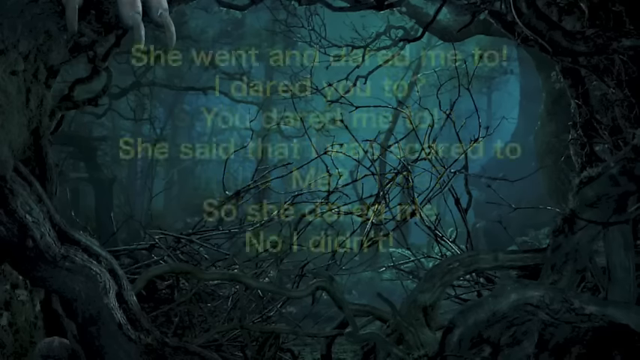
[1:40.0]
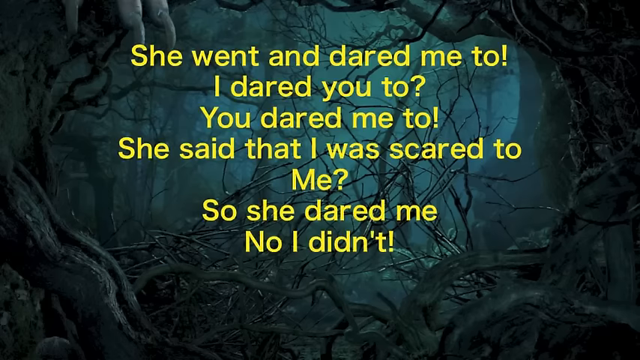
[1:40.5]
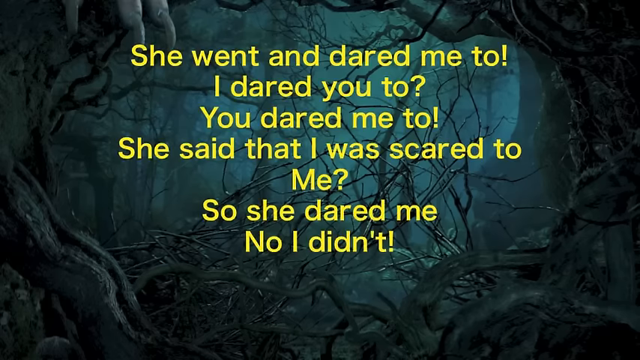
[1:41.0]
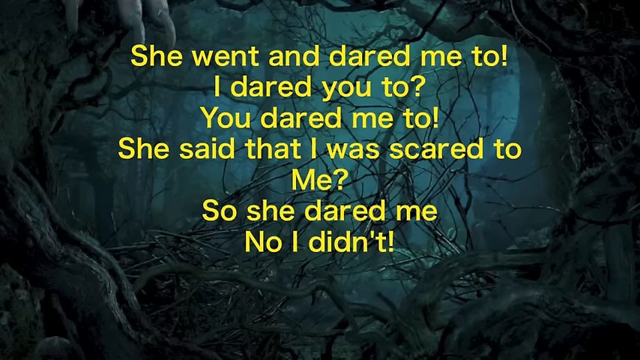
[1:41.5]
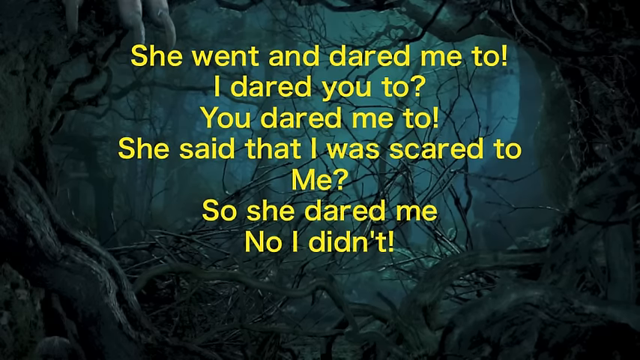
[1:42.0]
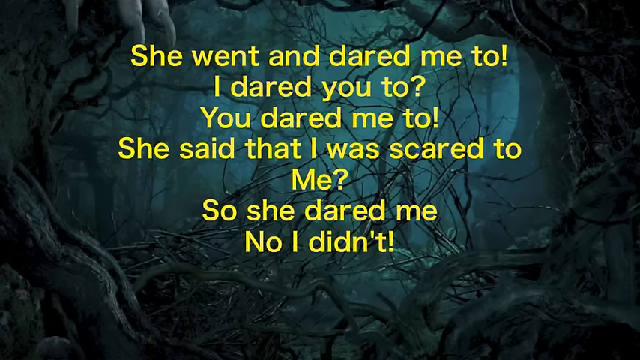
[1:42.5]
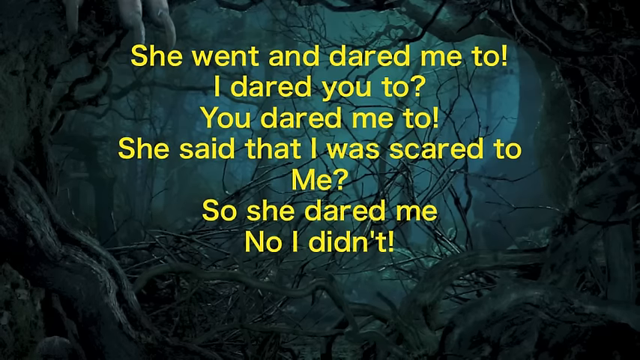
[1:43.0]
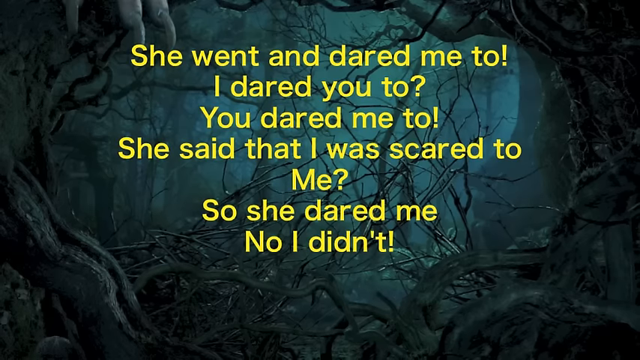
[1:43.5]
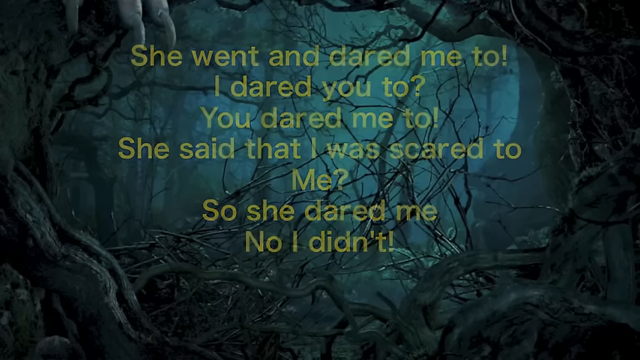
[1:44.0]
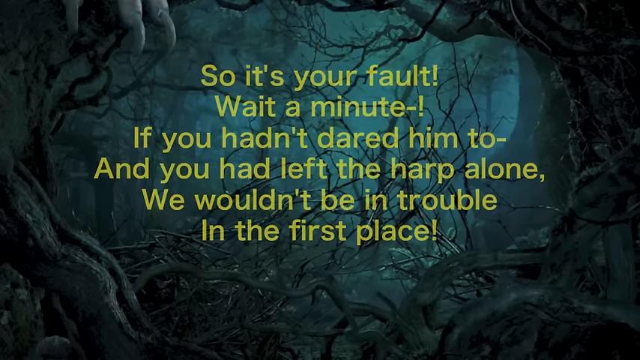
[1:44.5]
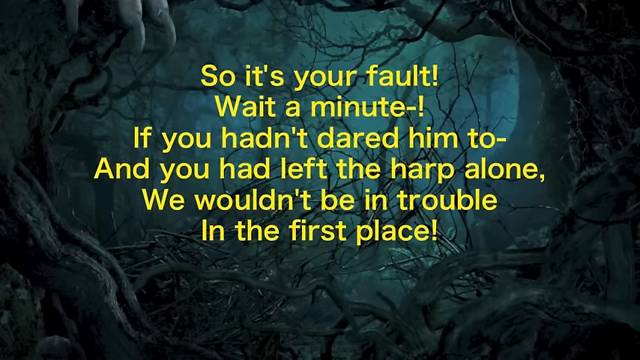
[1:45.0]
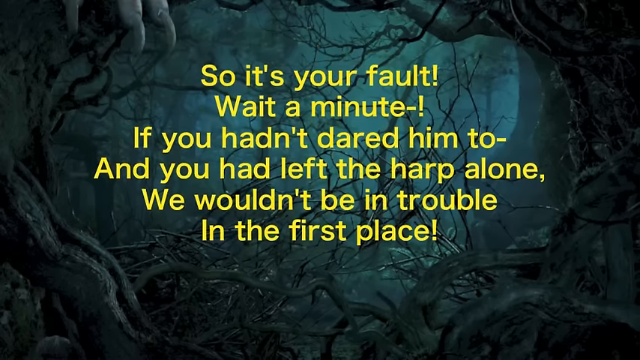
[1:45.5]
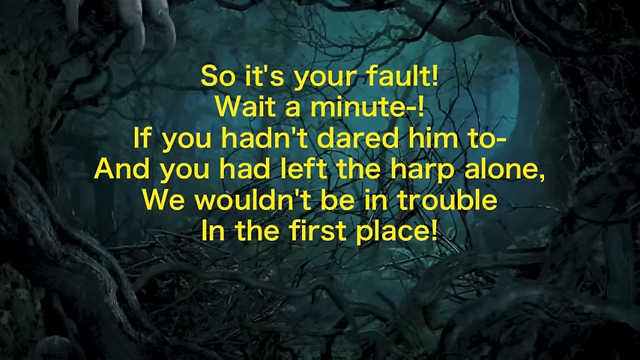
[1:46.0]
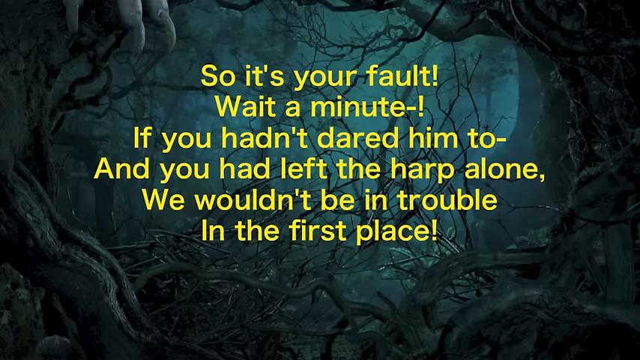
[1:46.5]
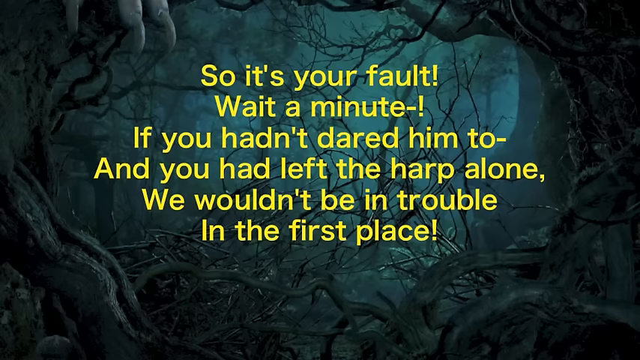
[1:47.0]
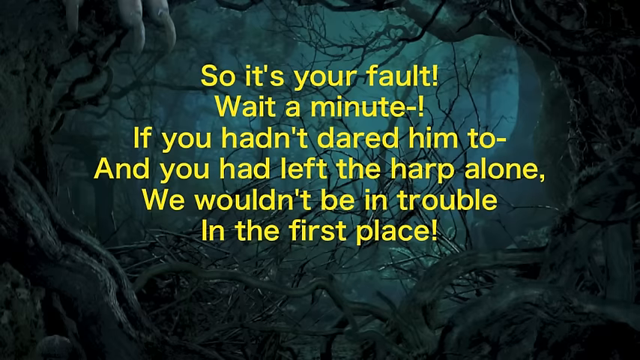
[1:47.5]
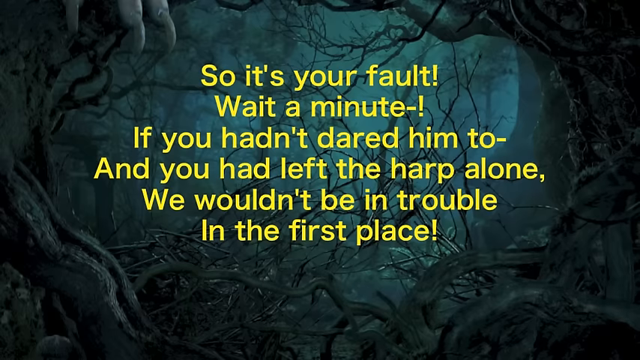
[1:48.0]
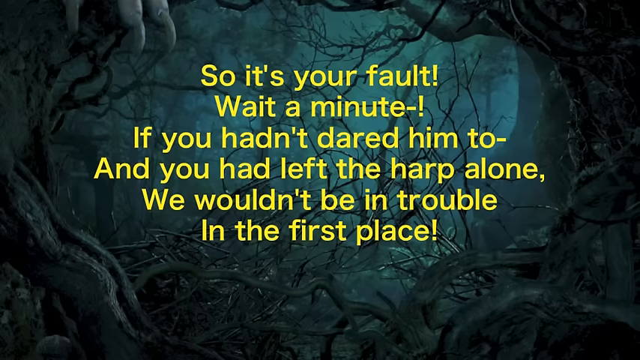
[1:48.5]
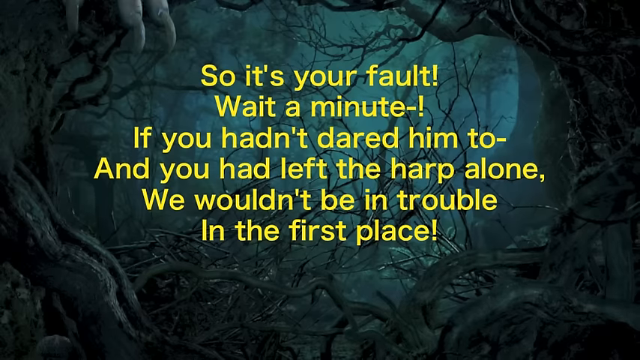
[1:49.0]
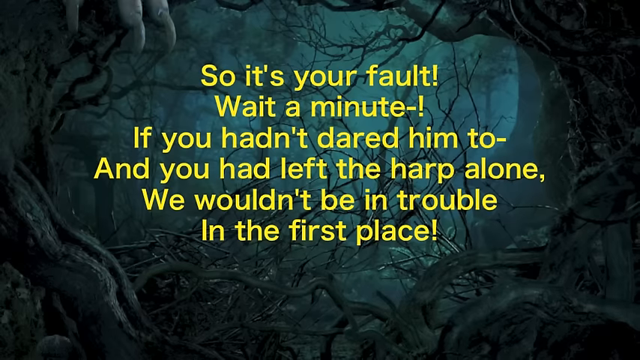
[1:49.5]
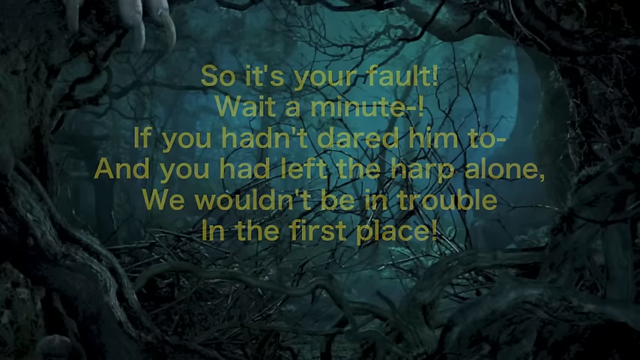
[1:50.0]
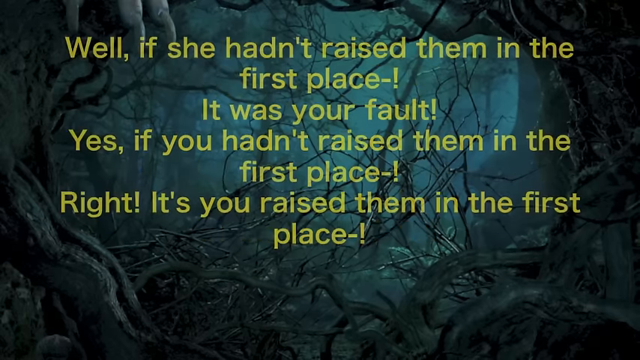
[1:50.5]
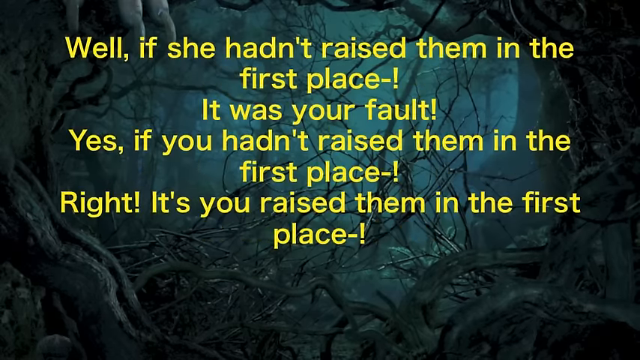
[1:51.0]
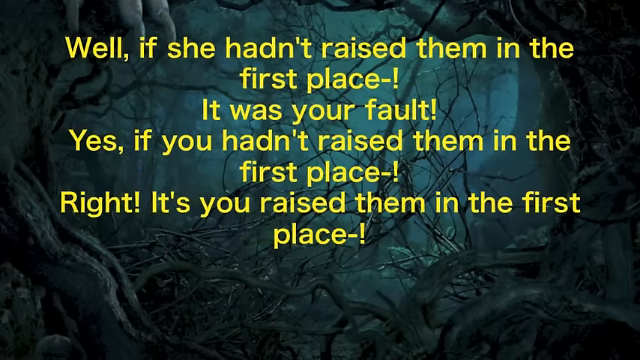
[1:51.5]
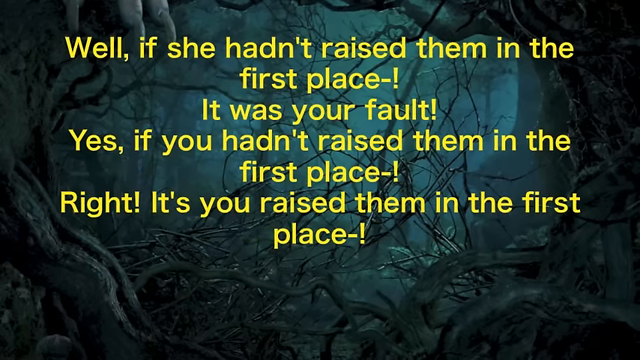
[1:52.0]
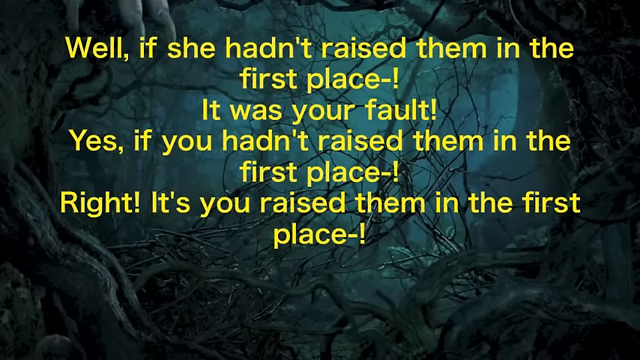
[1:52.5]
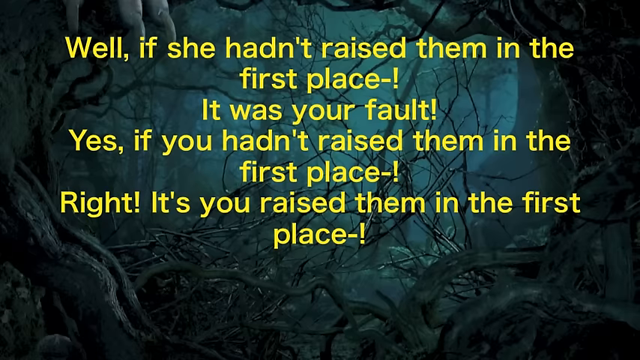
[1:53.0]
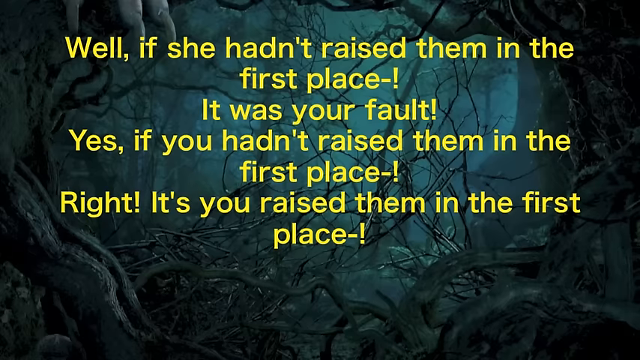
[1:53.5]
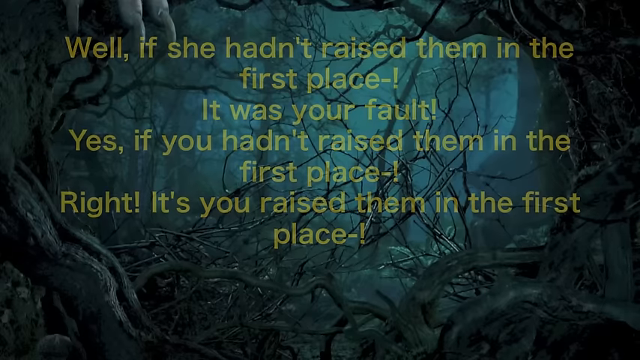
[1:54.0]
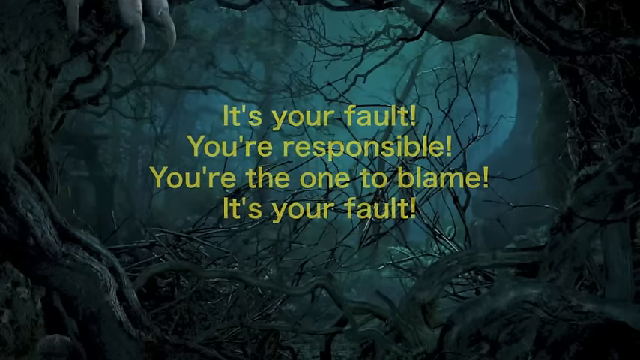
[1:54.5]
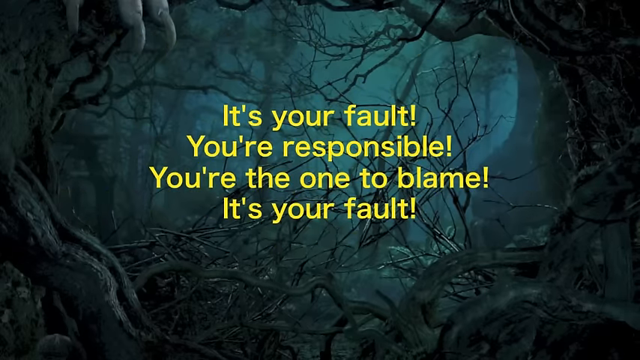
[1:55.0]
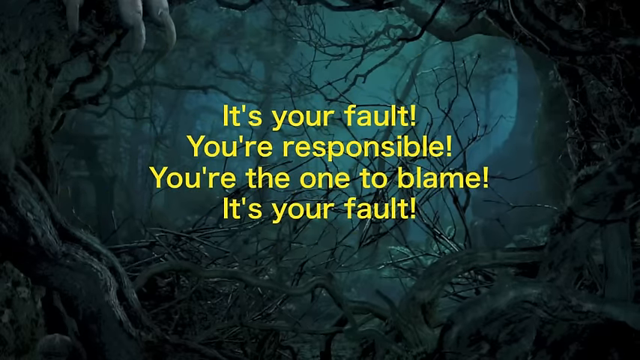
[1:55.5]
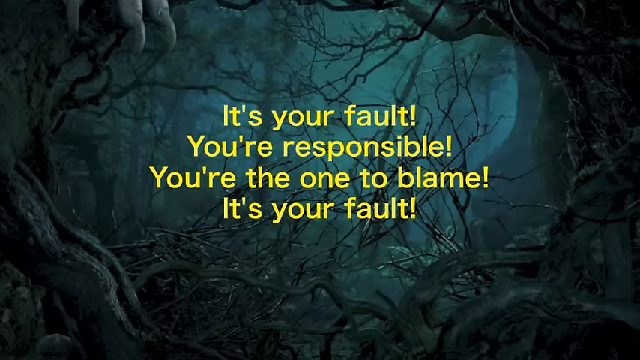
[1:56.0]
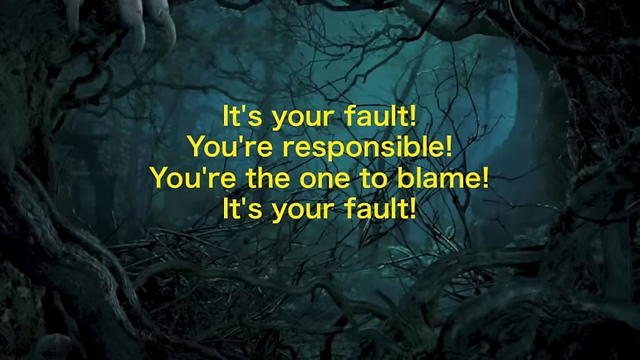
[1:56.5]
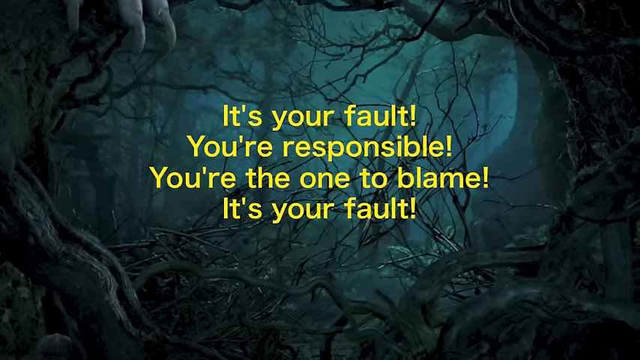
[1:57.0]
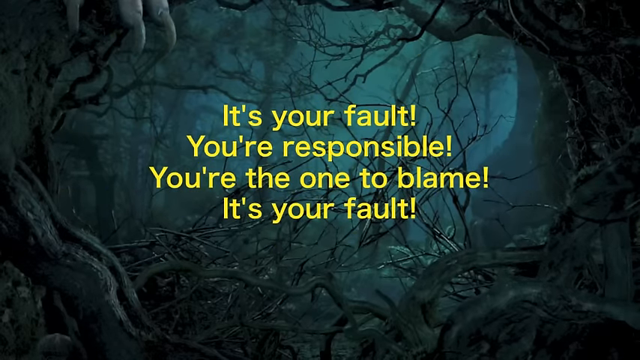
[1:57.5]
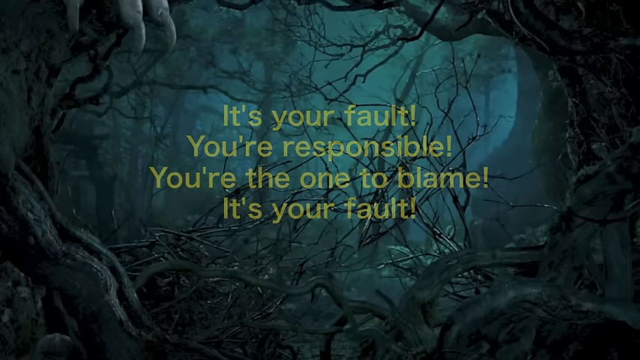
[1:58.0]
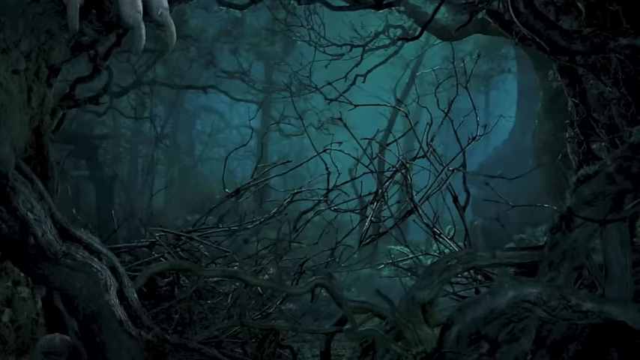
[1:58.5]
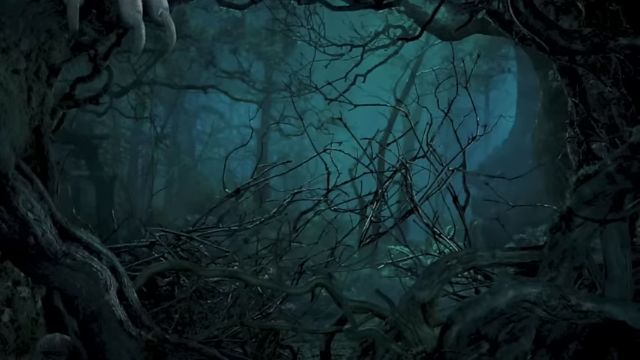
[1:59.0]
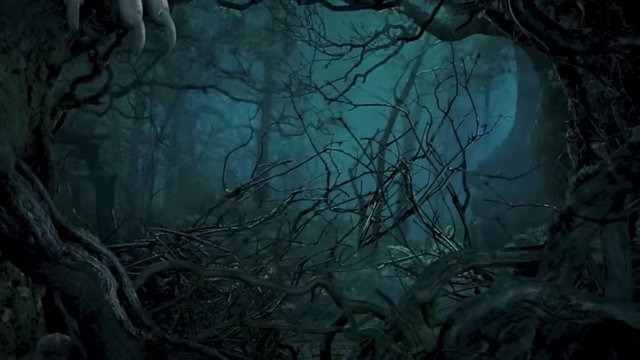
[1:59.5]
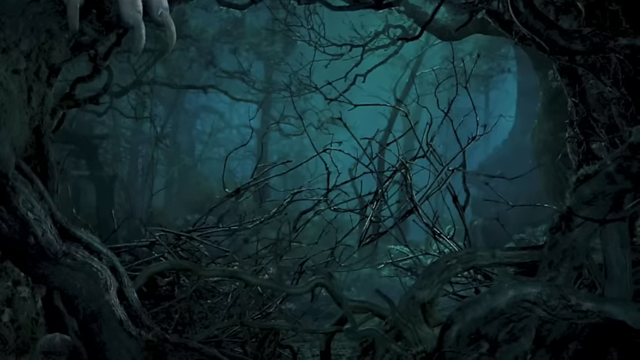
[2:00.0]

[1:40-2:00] The static background continues, with text being shown and fading away. The text reads "She went and dared me to. I dared you to. You dared me to. She said I was scared to. Me? So she dared me. No, I didn't.", then "So it's your fault. Wait a minute, if you hadn't dared him to, and you had left the harp alone, we wouldn't be in trouble in the first place.", then "Well, if she hadn't raised them in the first place, it was your fault. Yes, if you hadn't raised them in the first place. Right, it's you raised them in the first place." and finally "It's your fault. You're responsible. You're the one to blame. It's your fault." Nothing else changes; only the text on the screen changes over the static background.